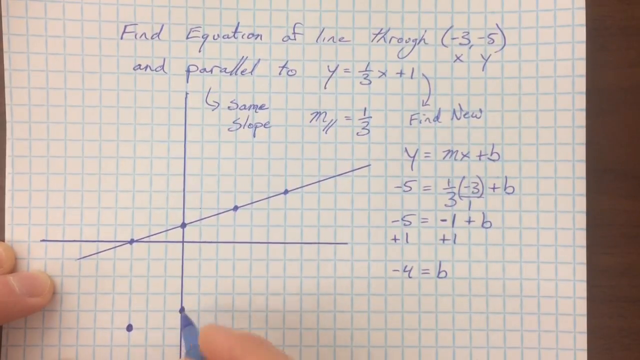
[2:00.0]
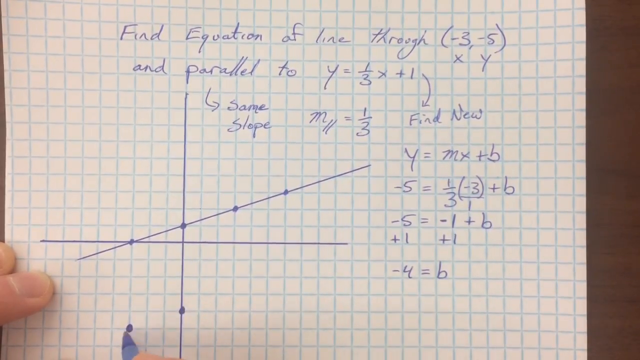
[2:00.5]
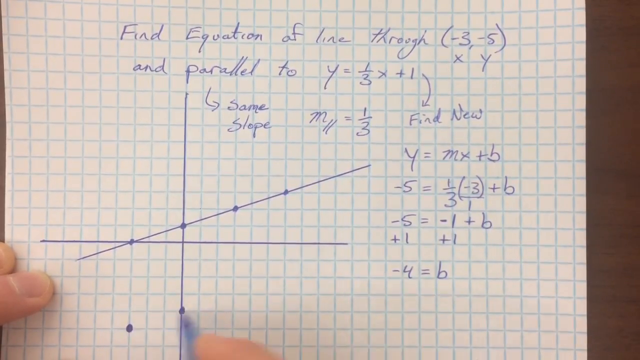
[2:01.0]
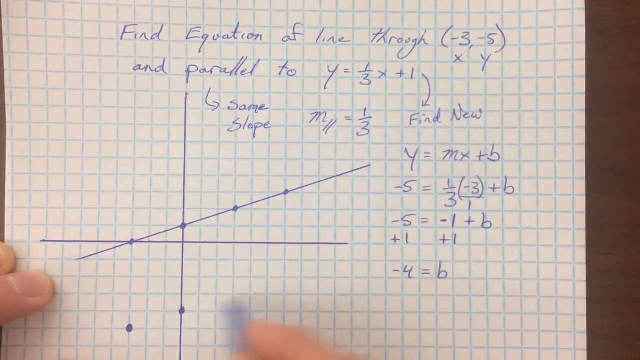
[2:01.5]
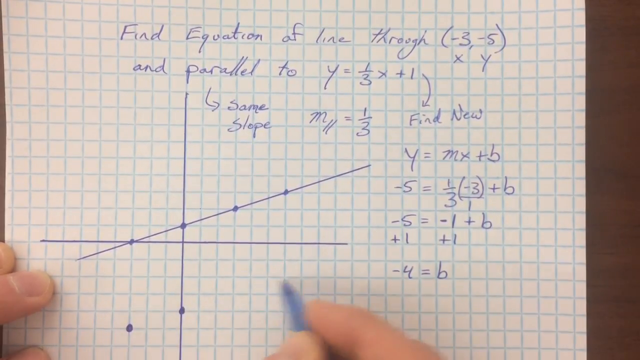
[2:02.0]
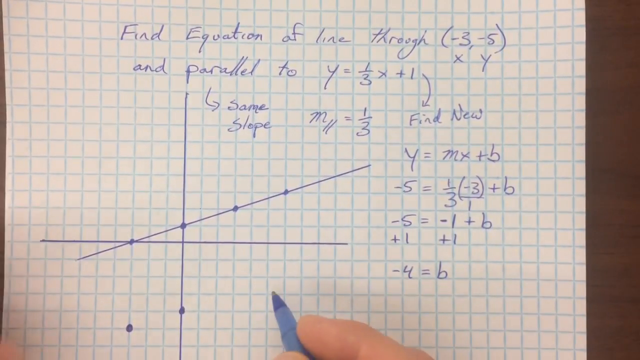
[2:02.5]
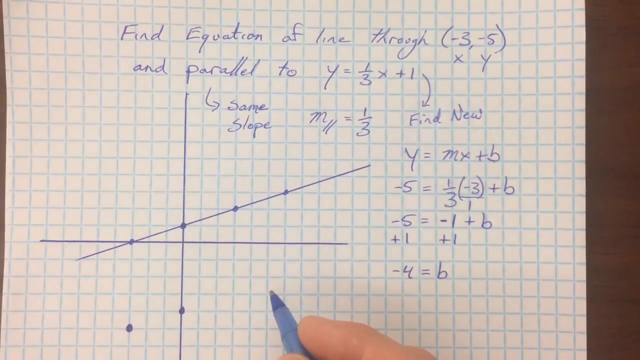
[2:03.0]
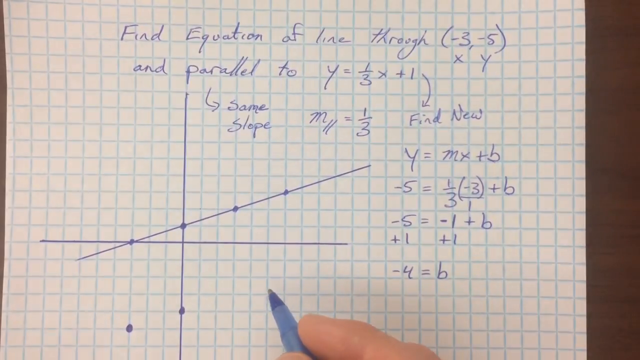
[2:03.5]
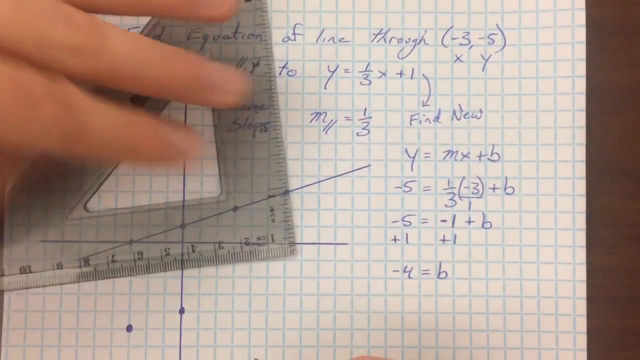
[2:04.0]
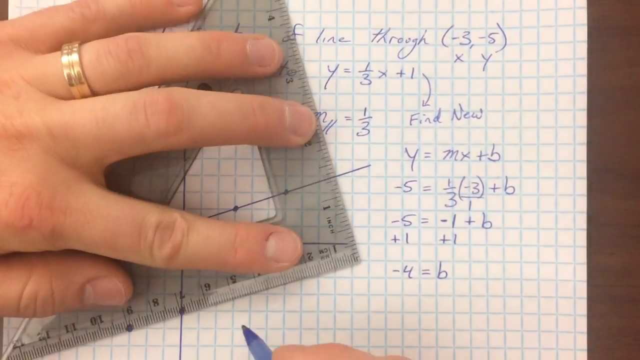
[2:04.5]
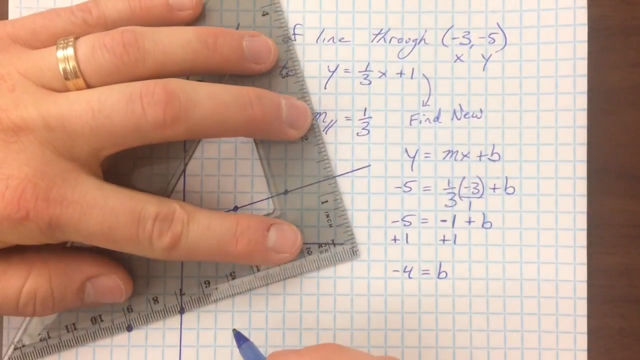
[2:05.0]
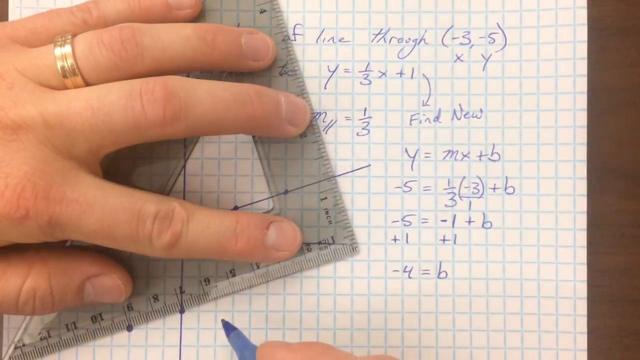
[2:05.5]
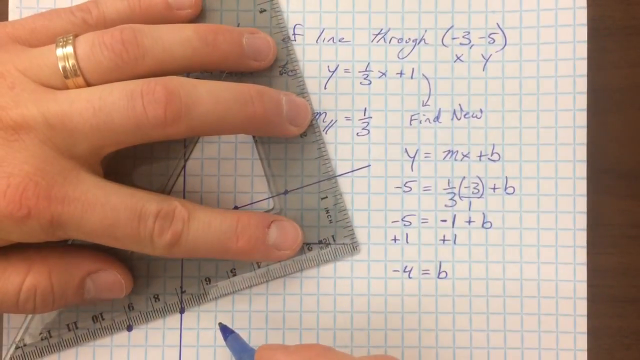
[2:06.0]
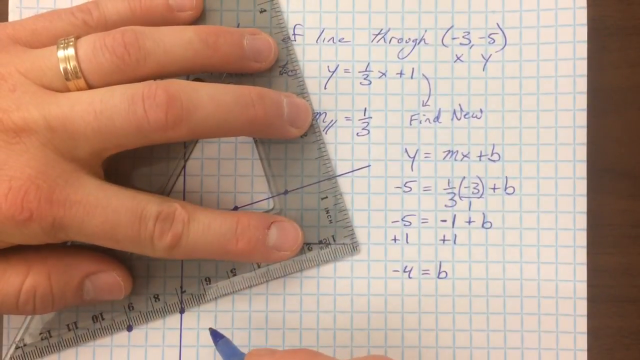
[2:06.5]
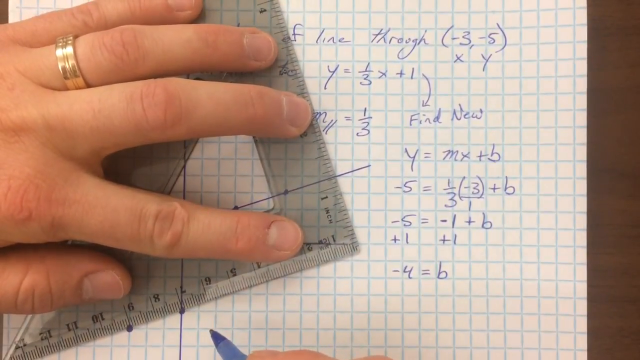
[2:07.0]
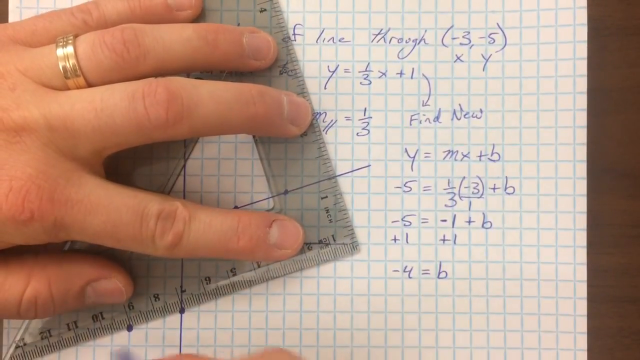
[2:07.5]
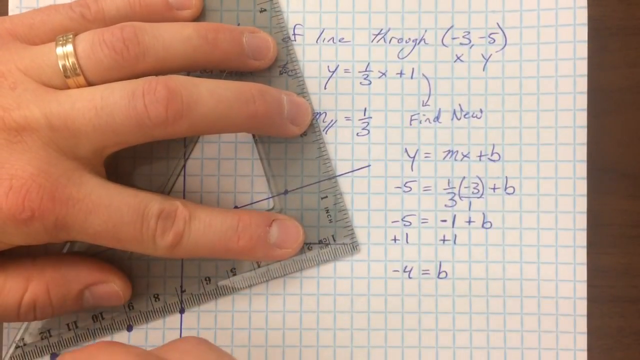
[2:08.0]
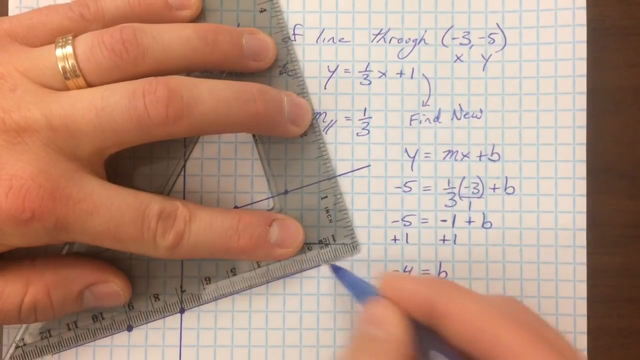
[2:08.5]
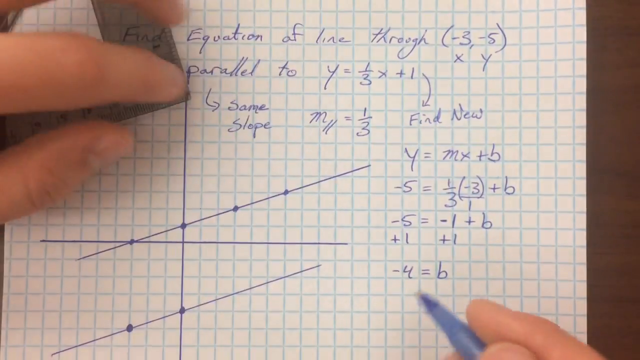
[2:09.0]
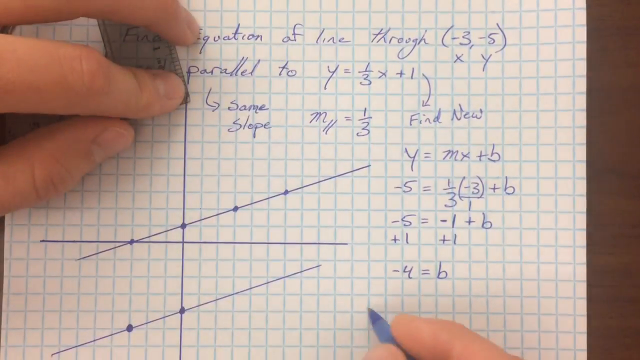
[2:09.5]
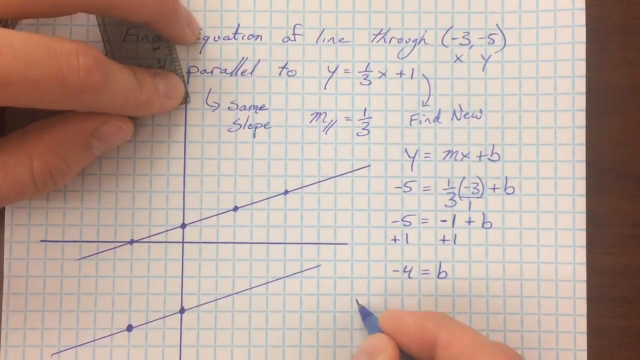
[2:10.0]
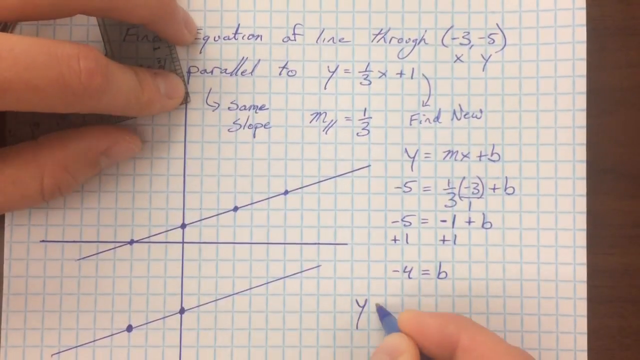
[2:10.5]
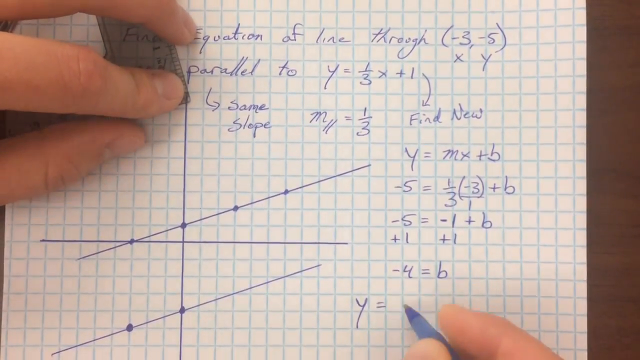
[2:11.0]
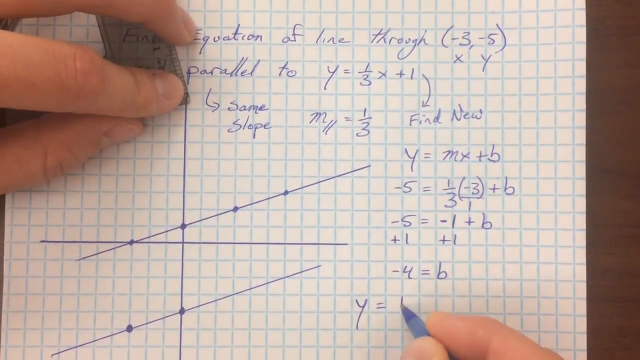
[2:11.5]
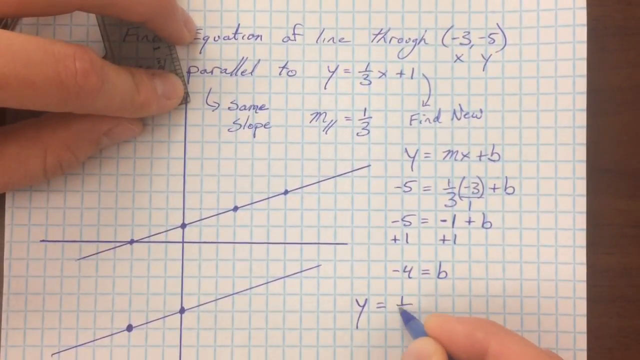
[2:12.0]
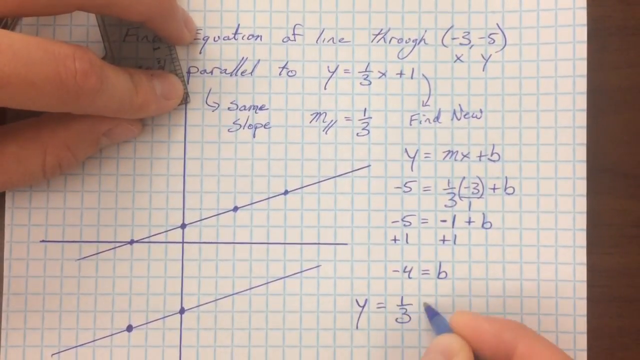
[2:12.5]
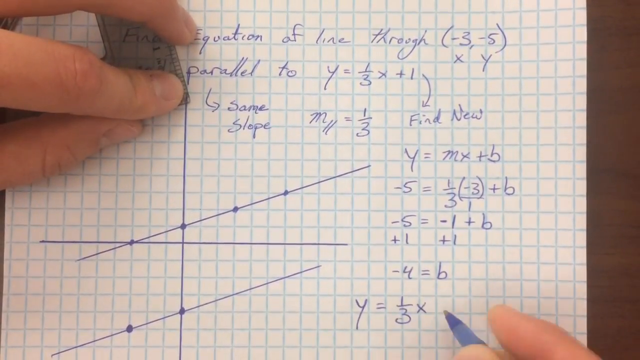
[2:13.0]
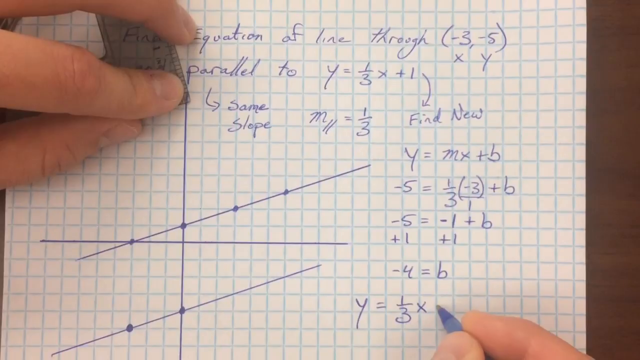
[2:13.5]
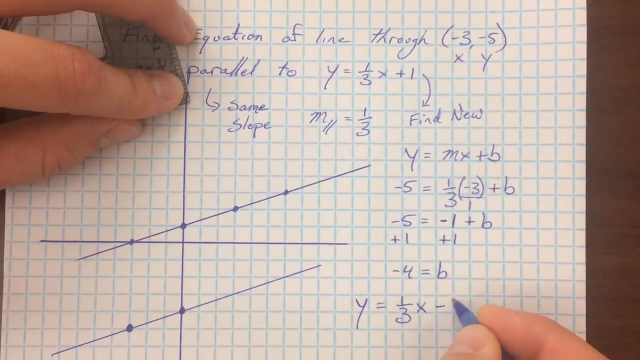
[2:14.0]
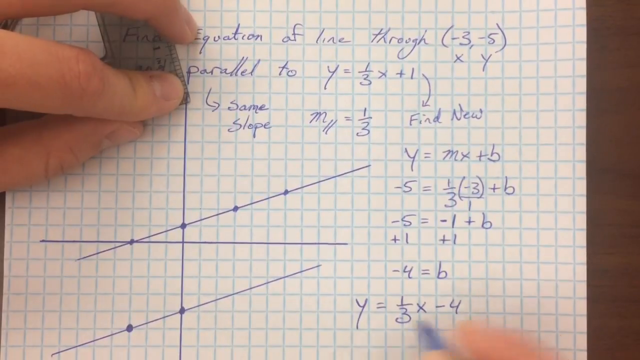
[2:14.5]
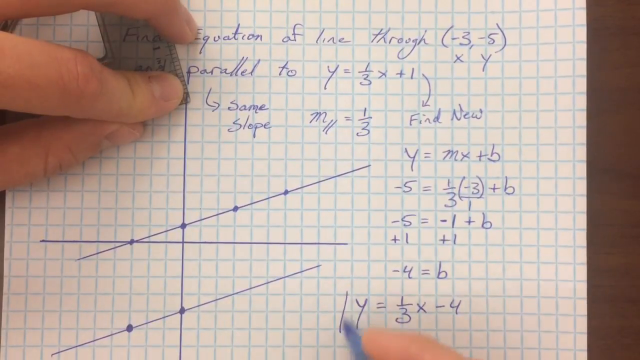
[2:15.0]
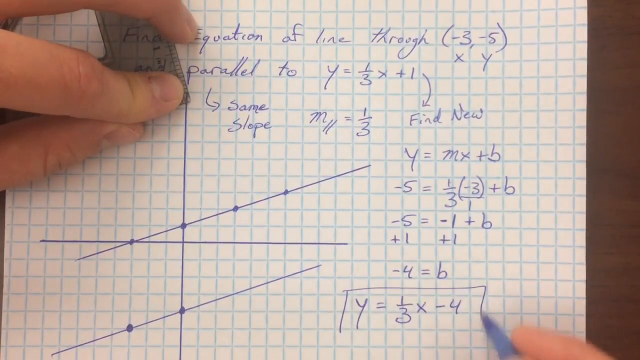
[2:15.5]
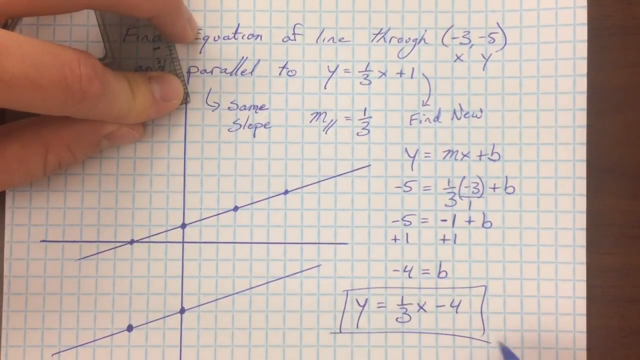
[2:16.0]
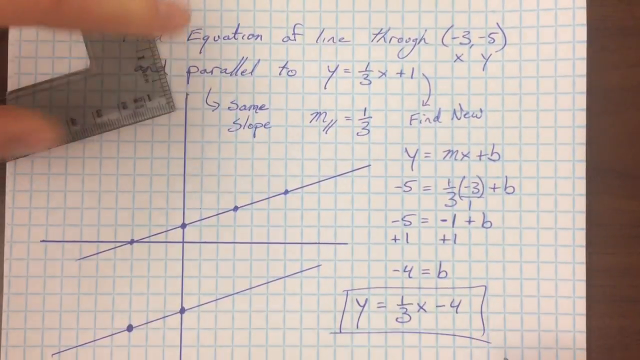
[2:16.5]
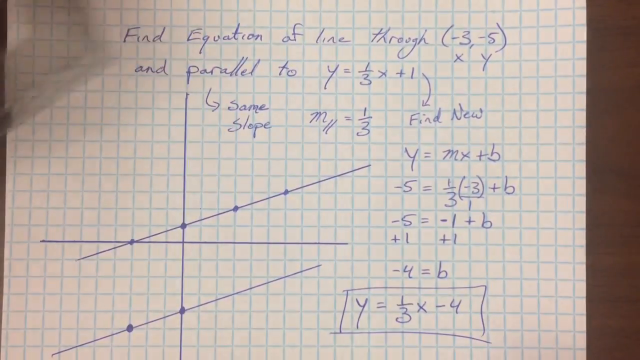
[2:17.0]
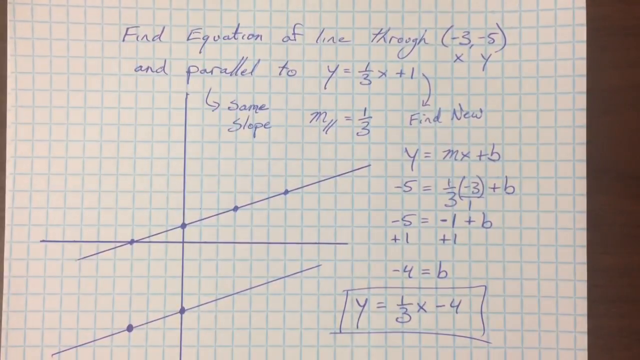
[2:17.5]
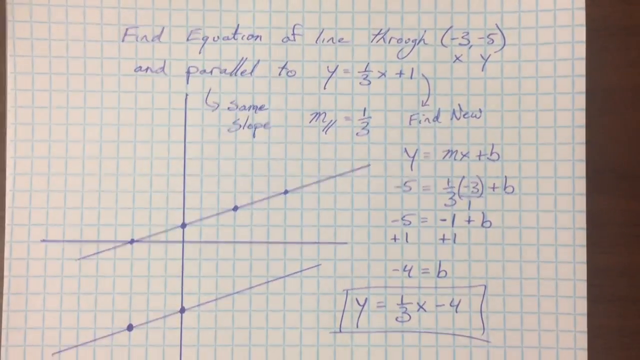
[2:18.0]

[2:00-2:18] The man has drawn the point -4, which equals b, on the graph. He then draws another point at the coordinate -3, -5, and uses a ruler to draw a line between the two points. His hand has a ring, and his nails are very short. After drawing the line, he writes the new equation of the line on the paper: y = 1/3x - 4, solving the problem.